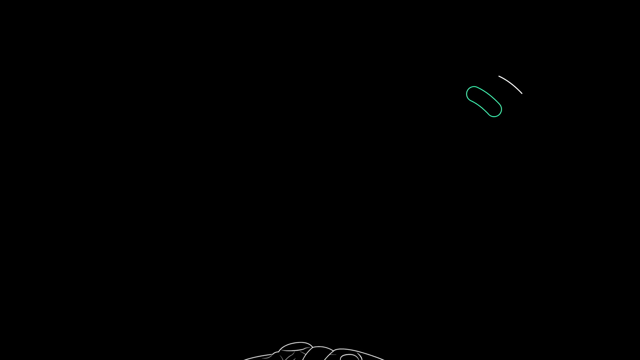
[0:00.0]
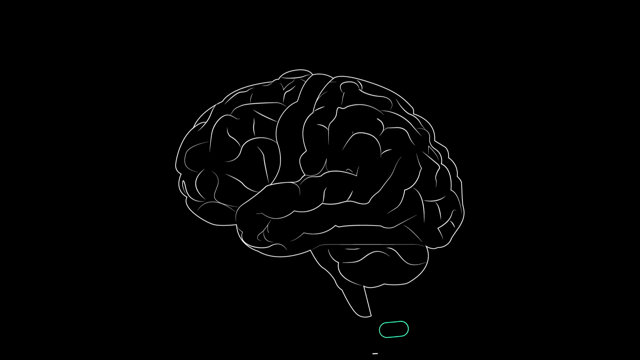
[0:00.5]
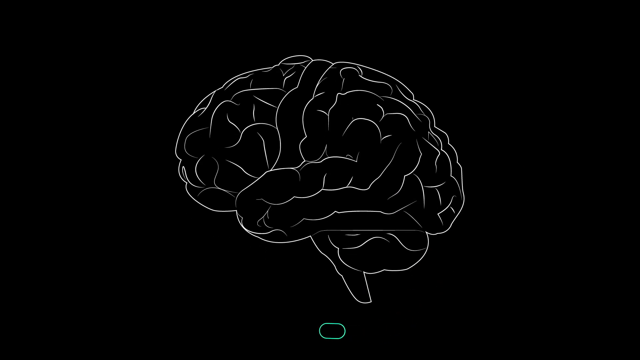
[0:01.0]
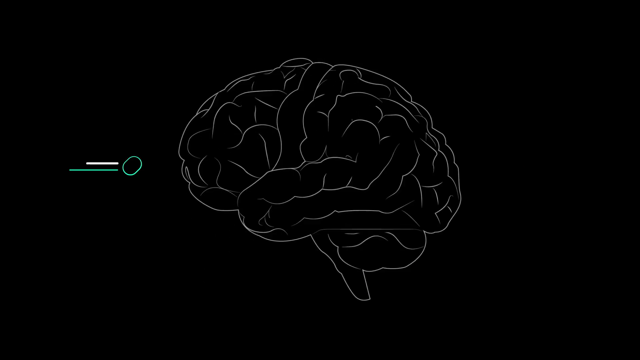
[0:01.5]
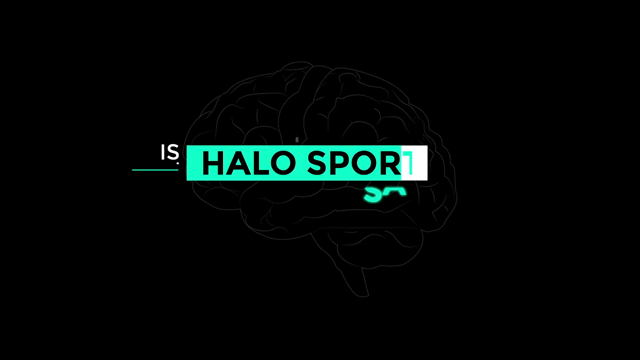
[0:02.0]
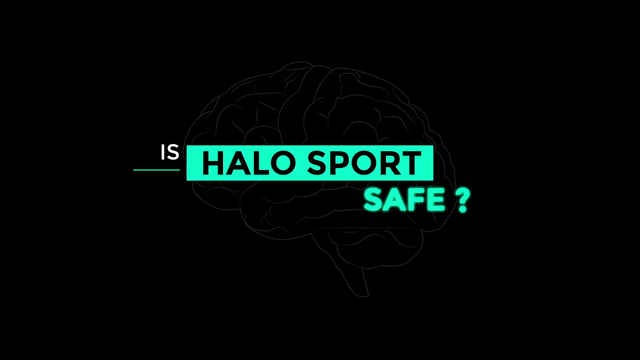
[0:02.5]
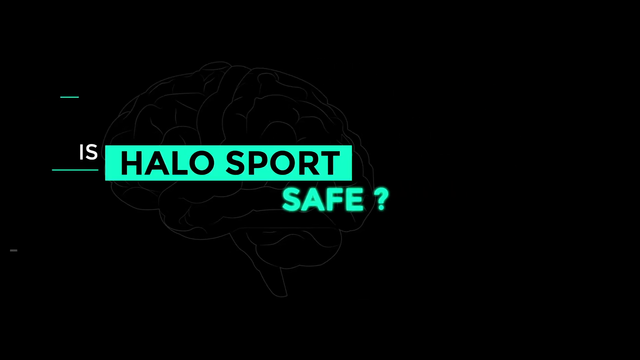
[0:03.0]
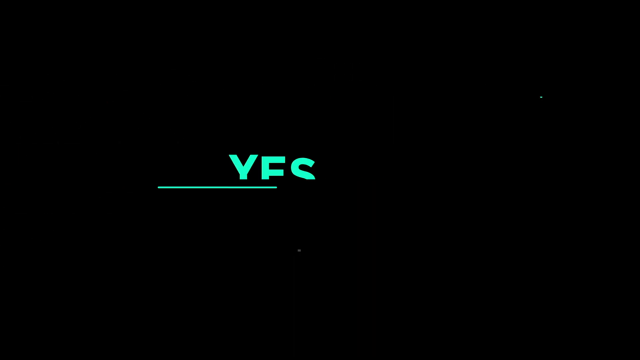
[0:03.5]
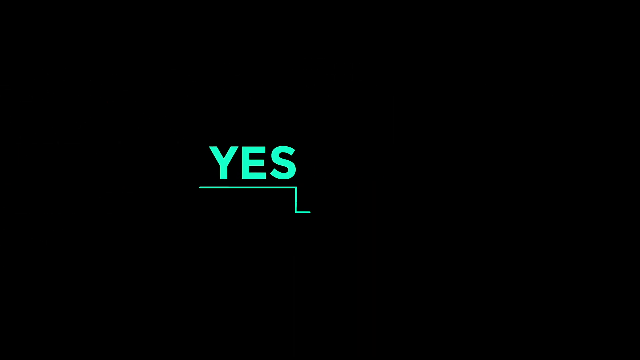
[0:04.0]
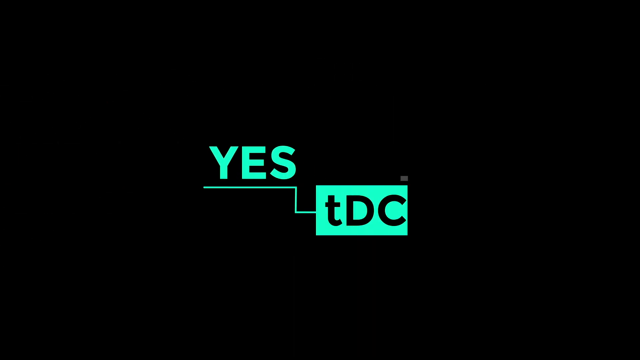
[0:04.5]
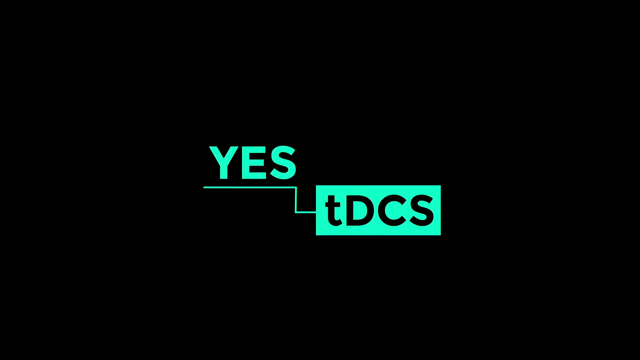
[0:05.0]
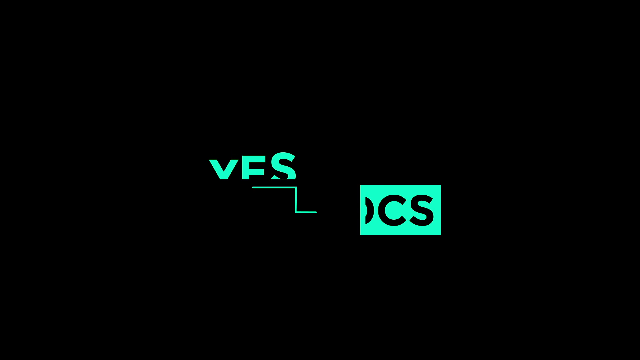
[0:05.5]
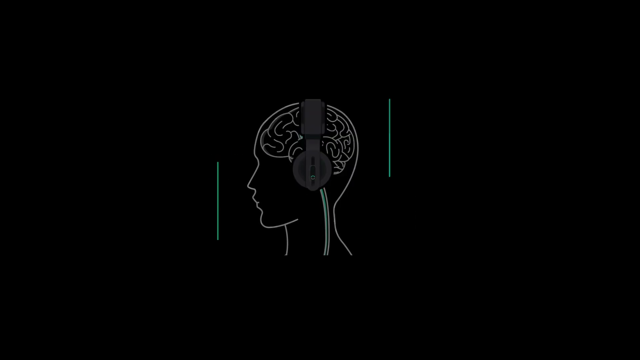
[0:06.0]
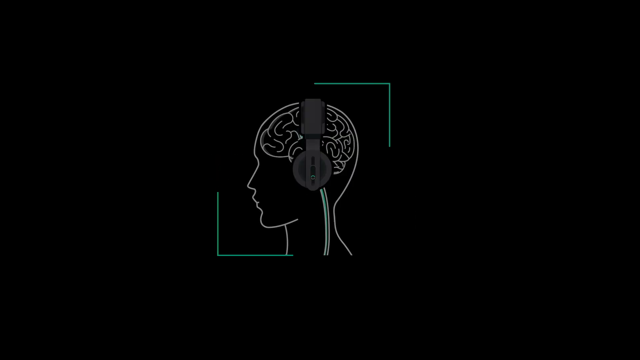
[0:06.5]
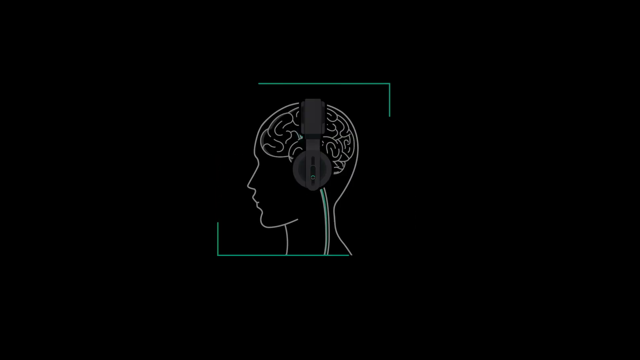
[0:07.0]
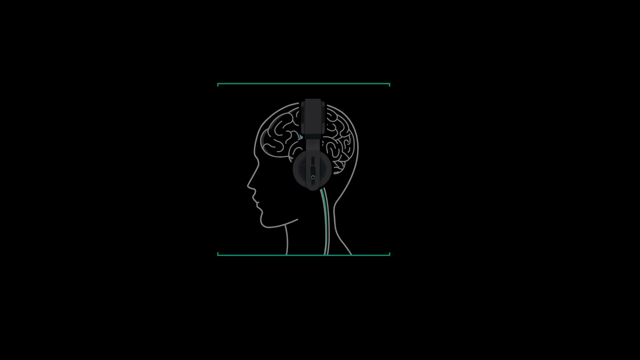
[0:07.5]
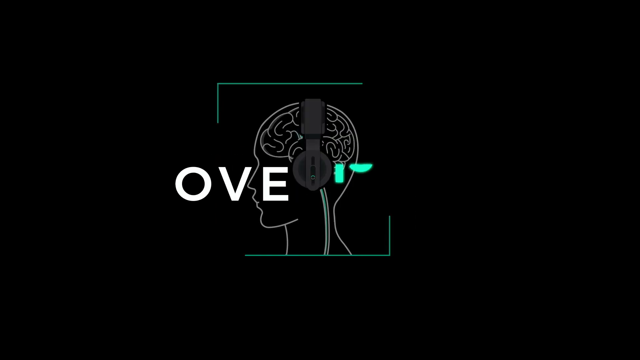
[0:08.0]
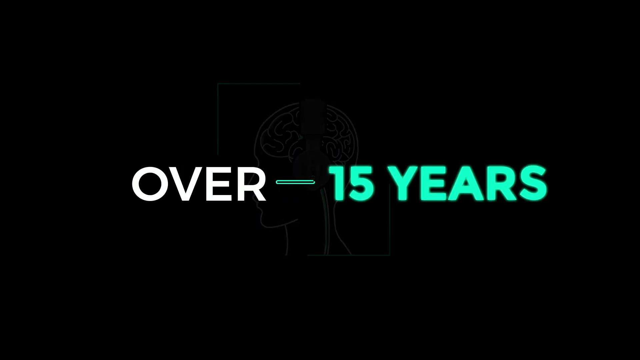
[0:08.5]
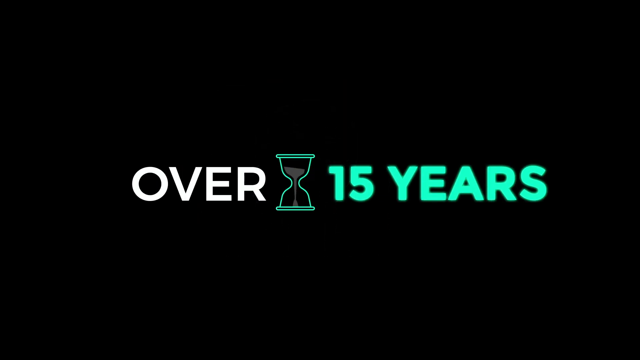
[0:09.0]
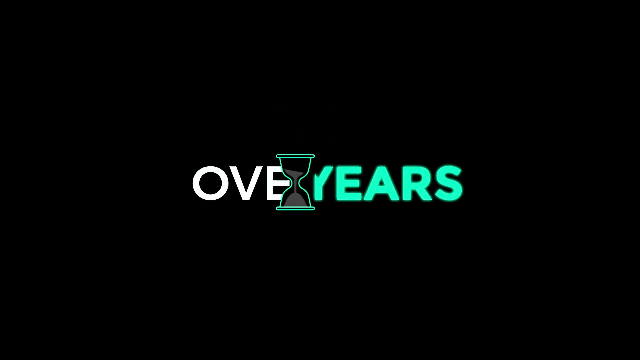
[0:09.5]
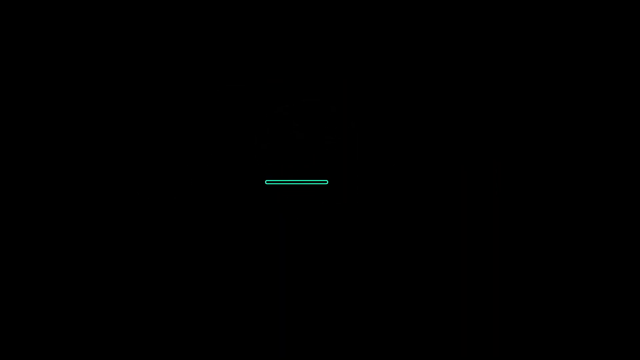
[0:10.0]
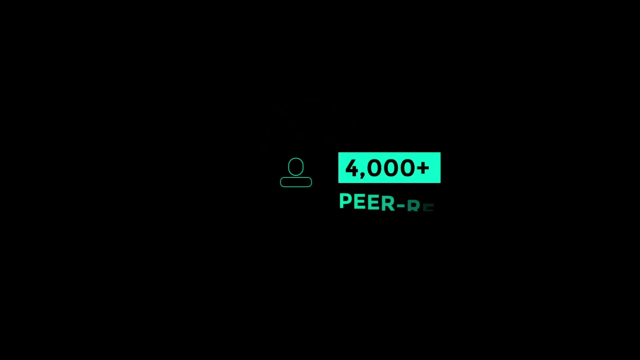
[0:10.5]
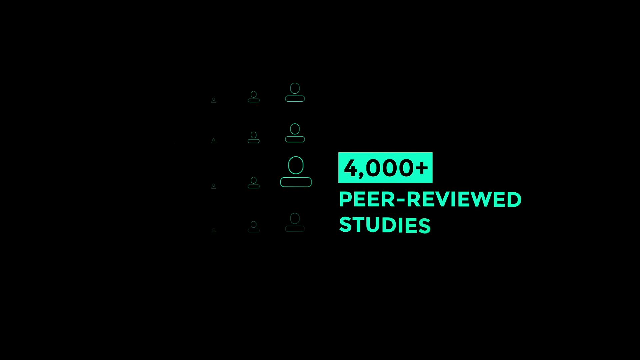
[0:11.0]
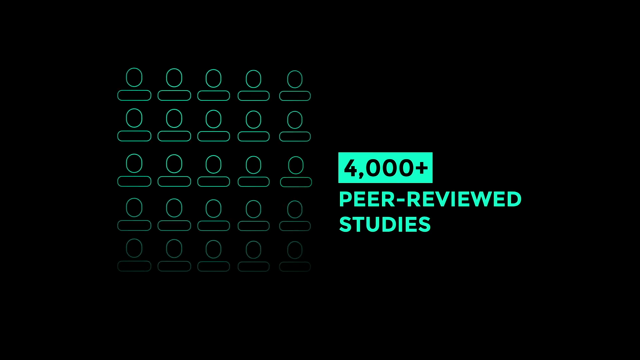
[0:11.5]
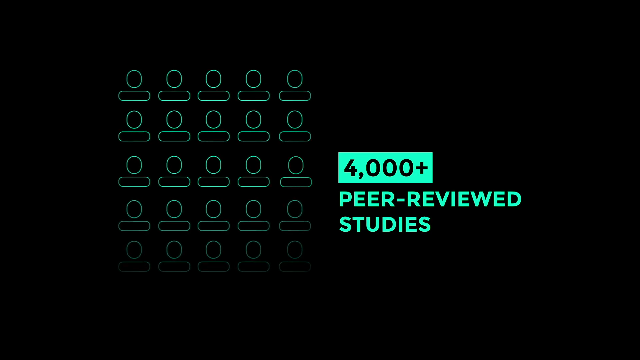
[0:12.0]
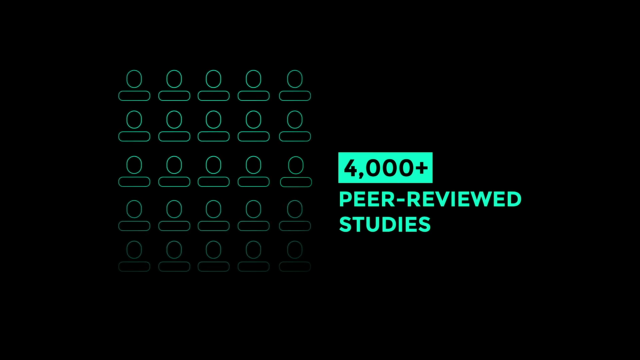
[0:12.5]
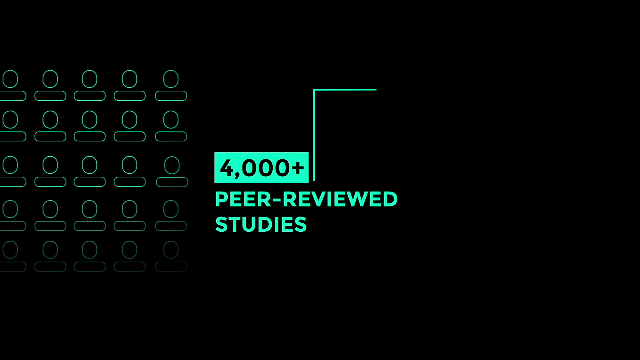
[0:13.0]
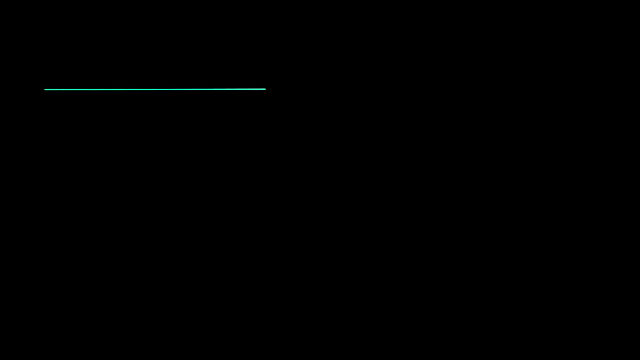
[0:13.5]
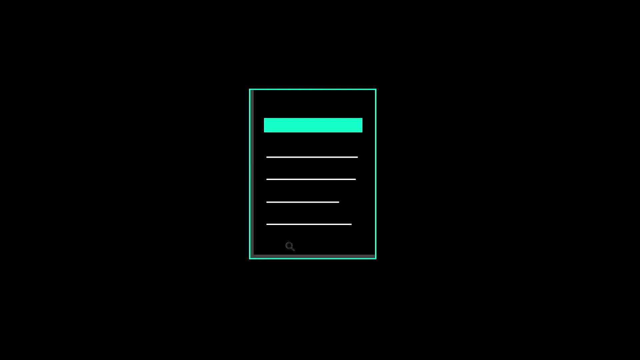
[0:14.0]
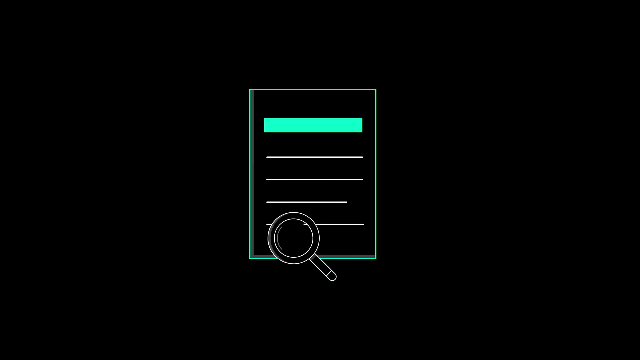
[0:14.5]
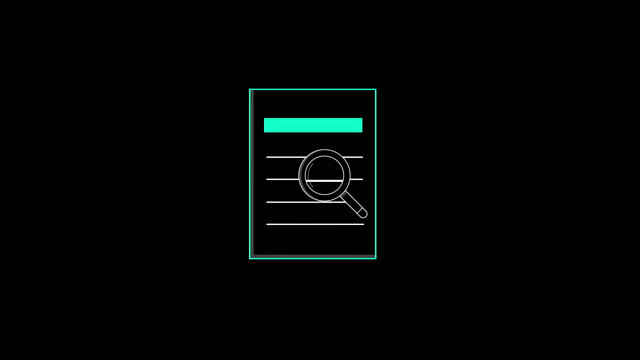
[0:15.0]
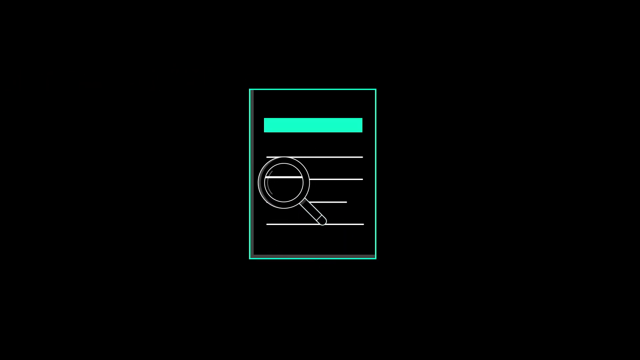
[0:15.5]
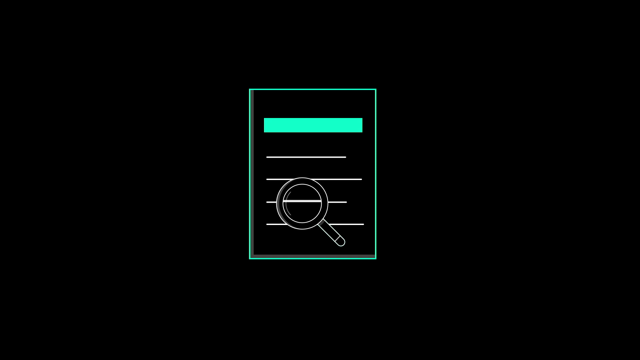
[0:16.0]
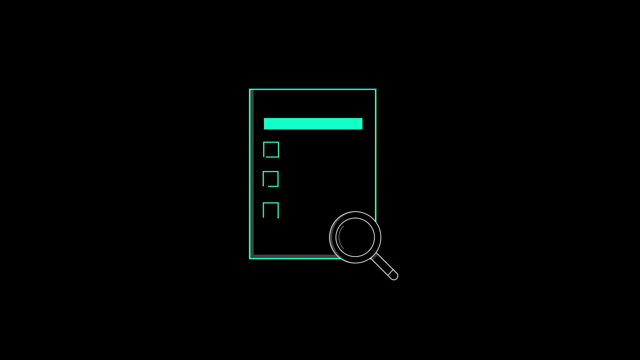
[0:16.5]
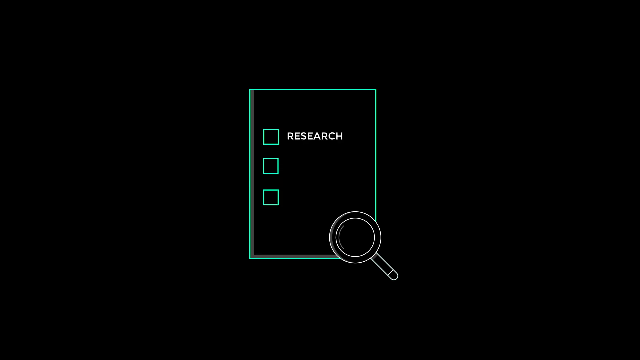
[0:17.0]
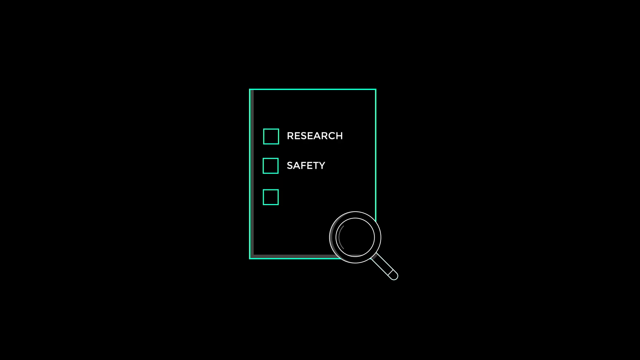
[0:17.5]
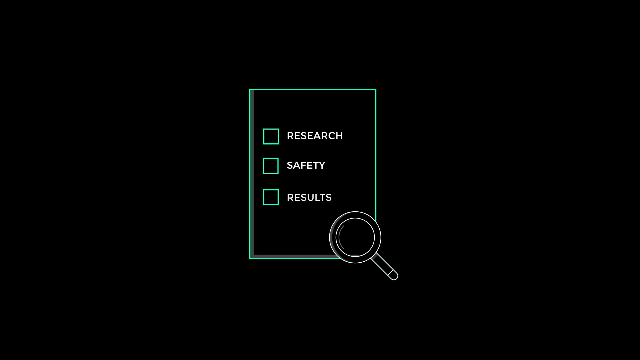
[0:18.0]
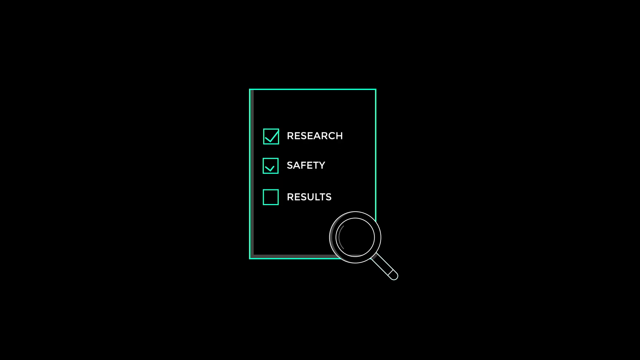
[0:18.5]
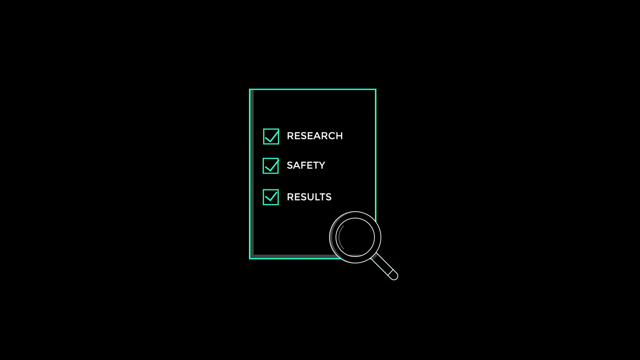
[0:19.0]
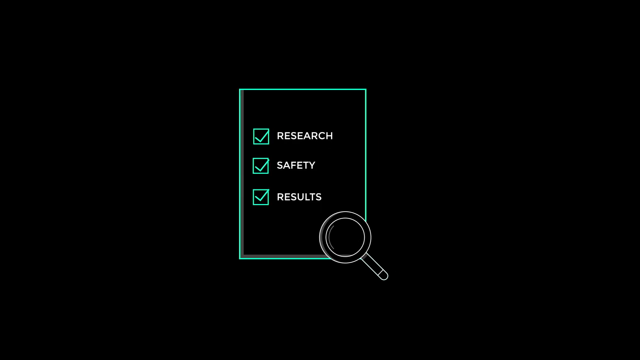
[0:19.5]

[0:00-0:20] The video opens on a drawing of a brain, drawn in white on a black background. On-screen text reads "Is Halo Sport Safe? Yes, TDCS." The brain then appears with something green around it. A drawing of a human head follows, with the brain visible inside it and a pair of headphones on the head. More text continues on screen: "over 15 years, 4,000-plus peer-reviewed studies." Next, a magnifying glass is on a piece of paper; everything is a digital drawing rather than an actual image. The paper reads "research safety results. More than 85 percent." Another graphic quickly comes onto the screen as the paper with the magnifying glass and the words "research safety results" quickly disappears off to the left.